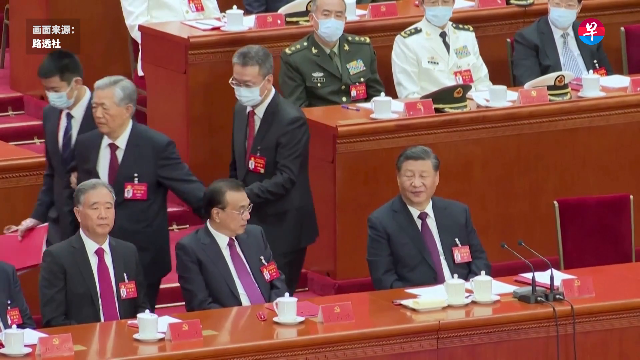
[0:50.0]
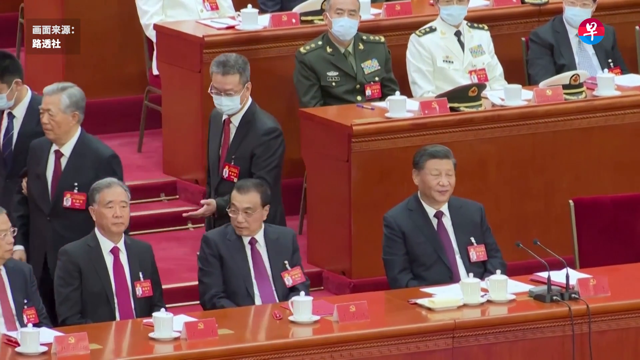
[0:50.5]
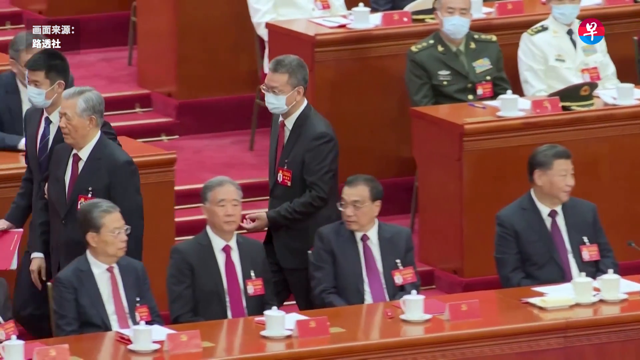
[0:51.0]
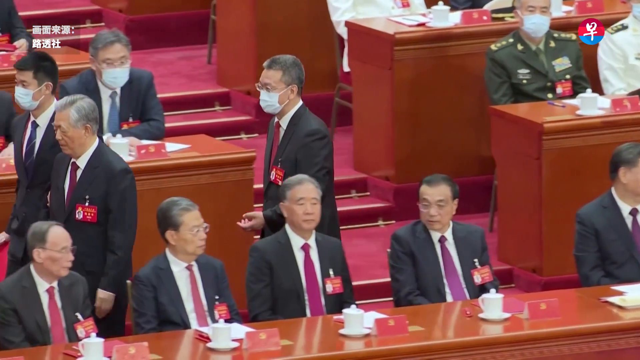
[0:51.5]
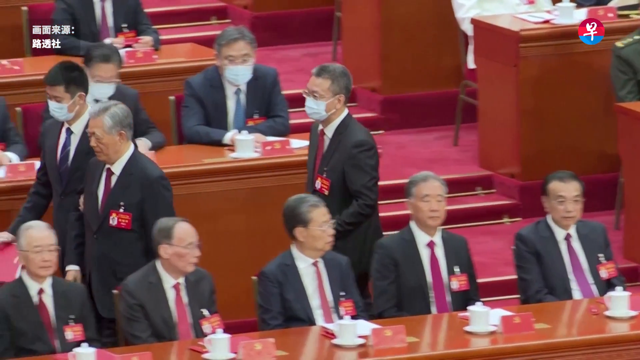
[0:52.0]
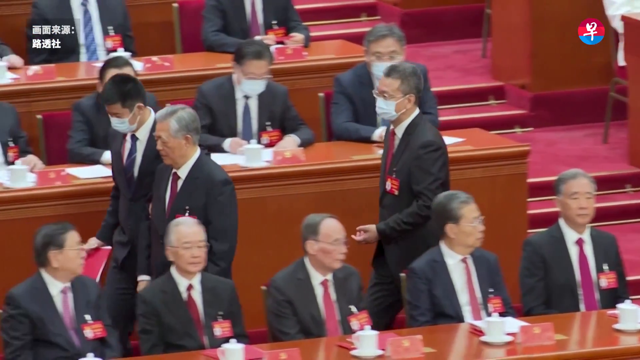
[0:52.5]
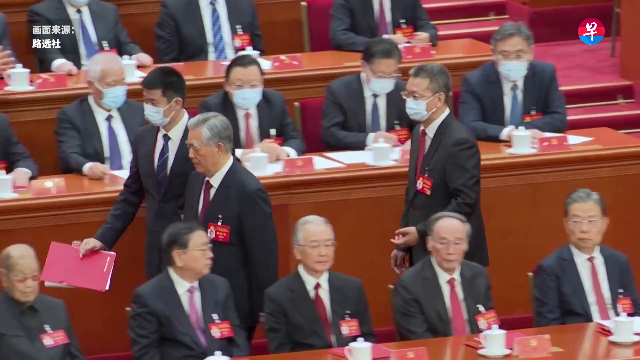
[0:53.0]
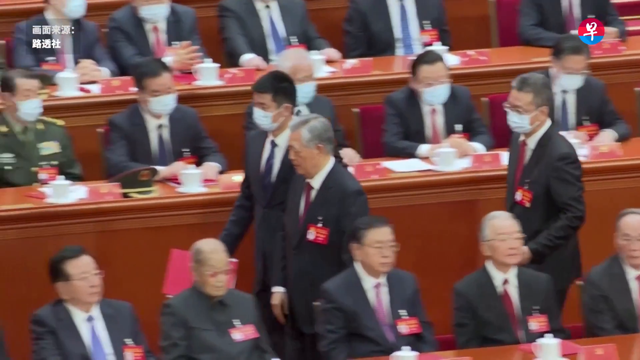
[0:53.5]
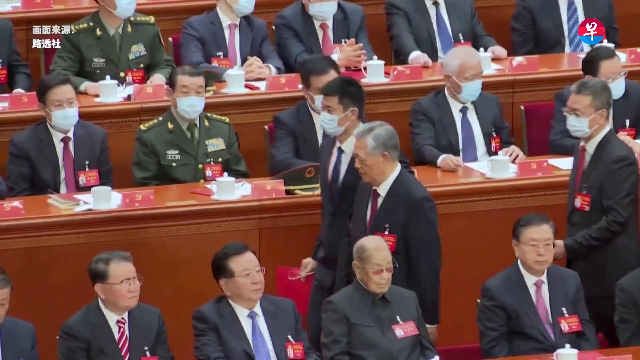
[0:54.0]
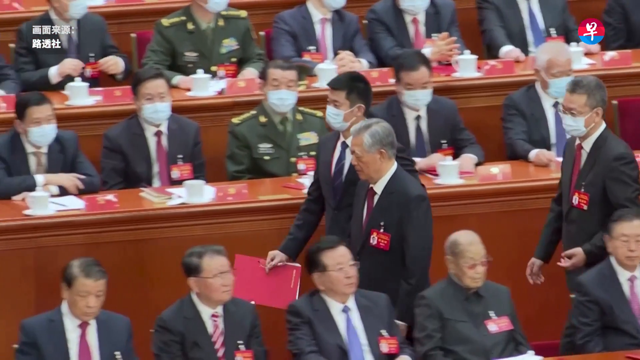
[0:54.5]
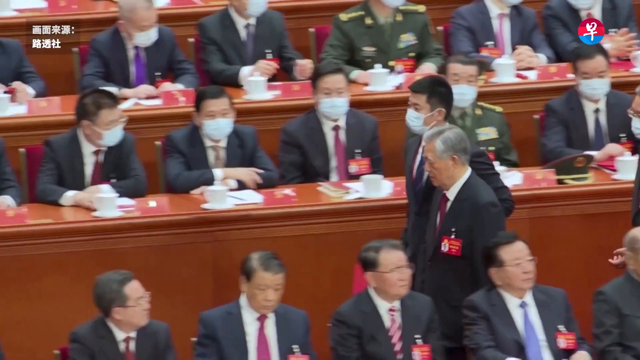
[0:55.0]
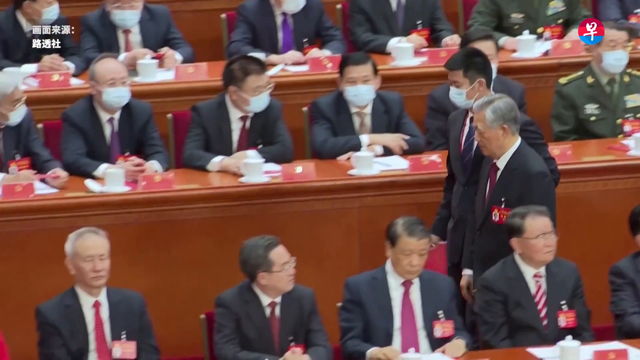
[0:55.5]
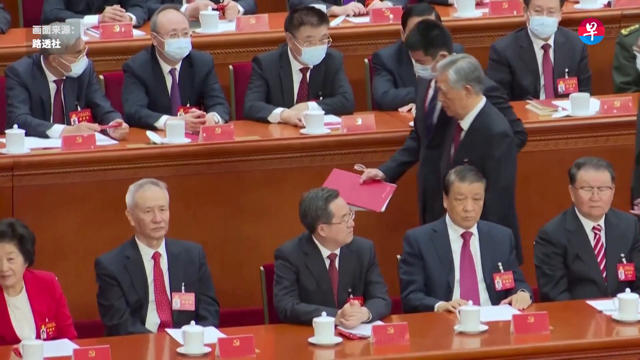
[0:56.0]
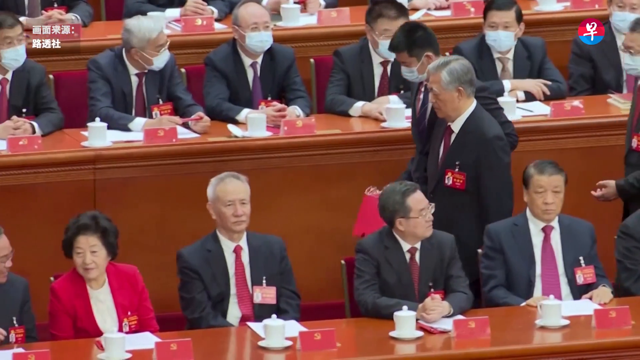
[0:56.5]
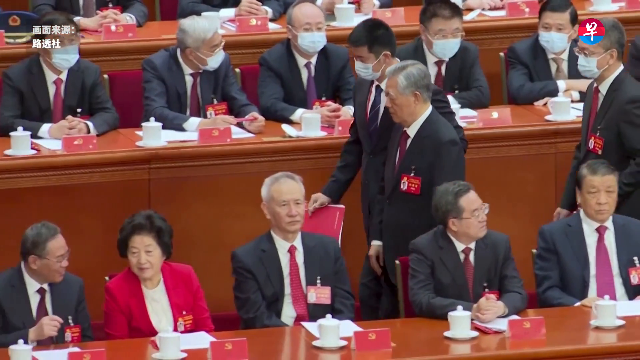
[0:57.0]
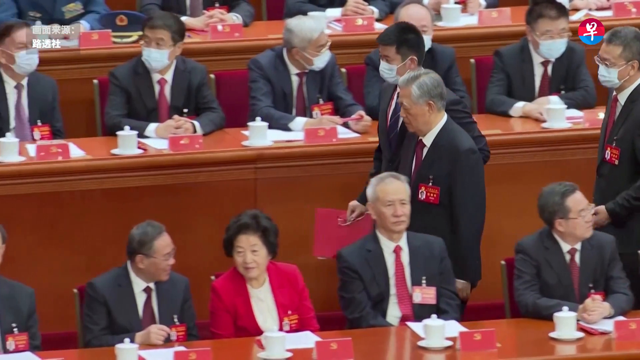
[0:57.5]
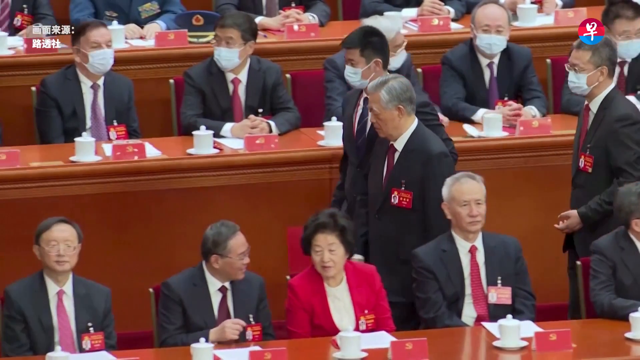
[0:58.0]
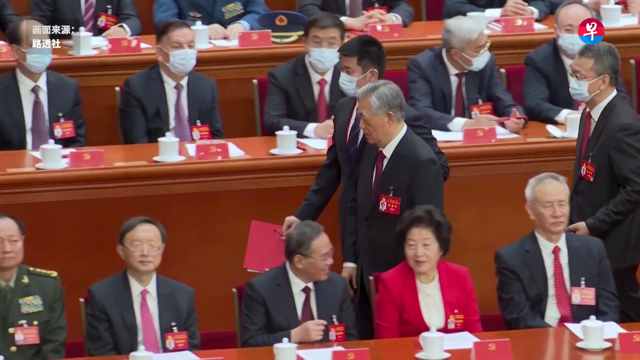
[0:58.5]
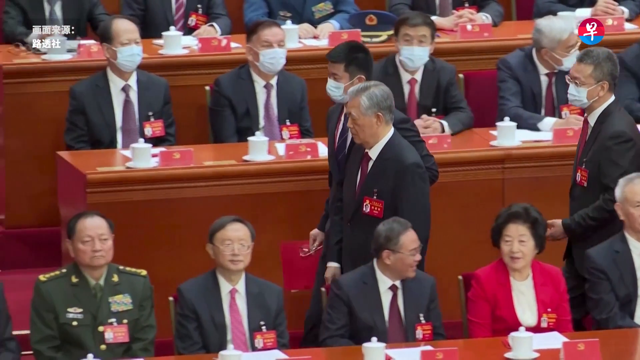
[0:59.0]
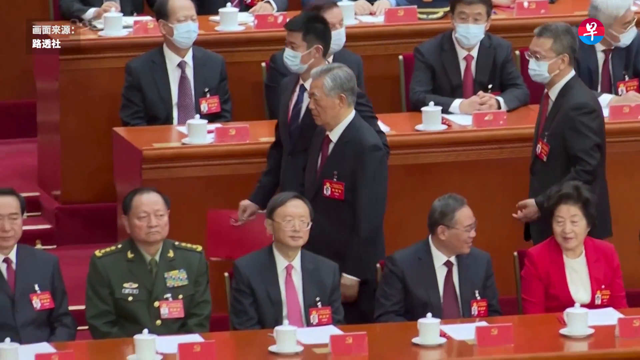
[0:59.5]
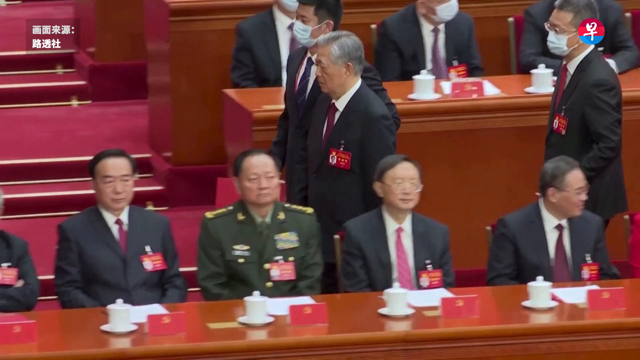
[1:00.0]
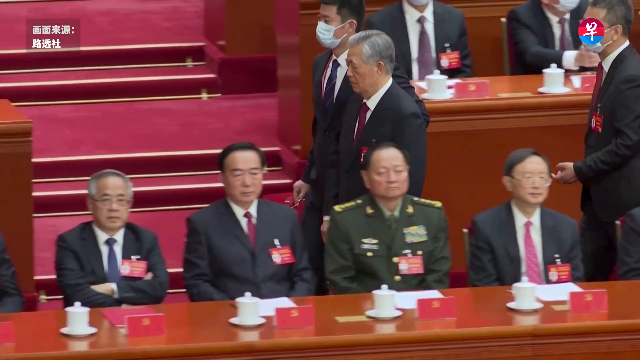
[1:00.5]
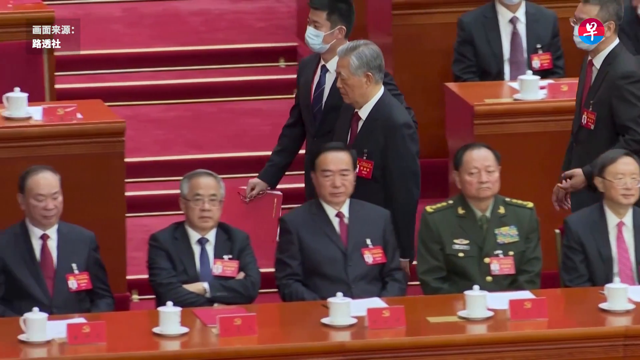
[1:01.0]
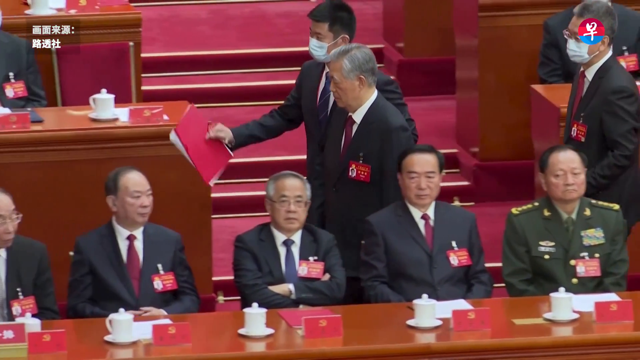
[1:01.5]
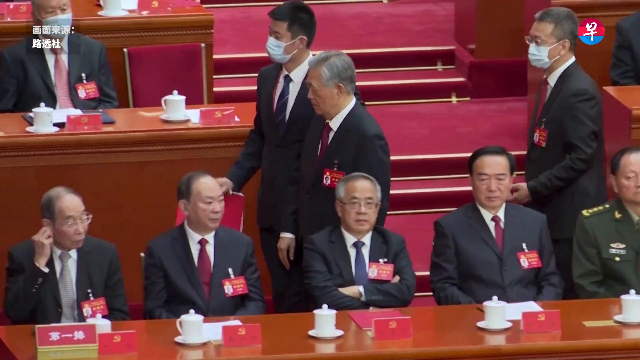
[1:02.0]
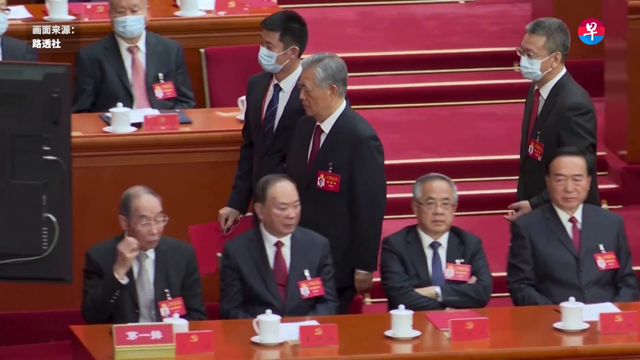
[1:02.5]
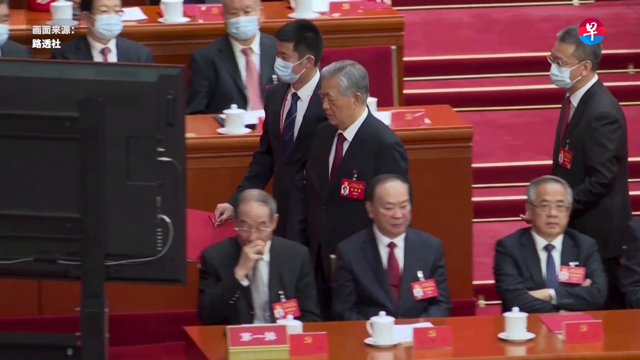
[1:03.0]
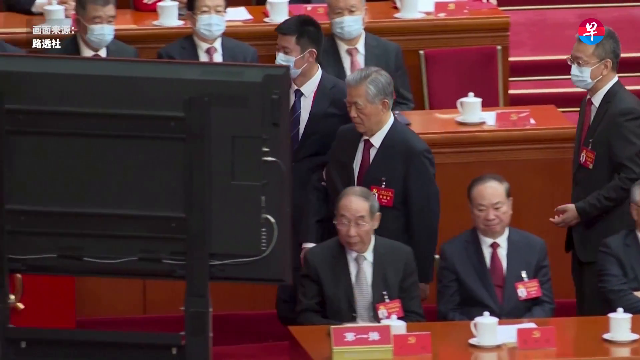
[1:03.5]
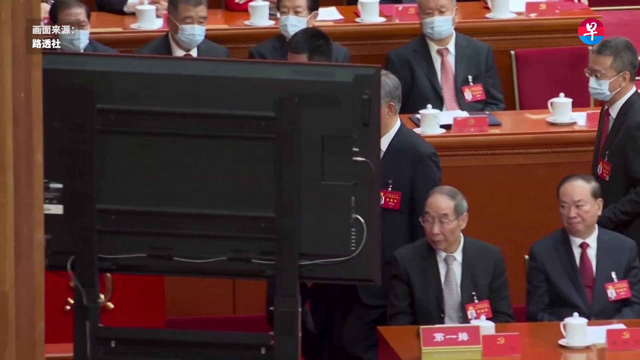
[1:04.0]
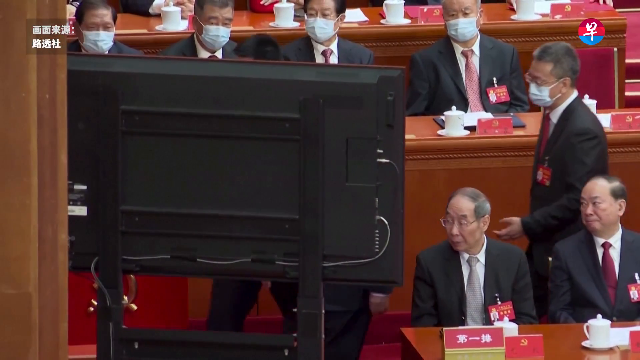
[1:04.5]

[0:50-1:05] An older gentleman with white and greyish hair, in a grey suit, is surrounded by other men in grey suits, white collared shirts and burgundy ties. He is escorted by a younger gentleman with short black hair and another gentleman behind him, both wearing masks. The gentlemen at the front are unmasked, while the gentlemen in the back two rows of long brown tables, sitting on red chairs, all wear white masks. They all have white cups with lids, a red square in front of each of them, and red identification tags on their jackets. A light greyish box at the top left has white lettering in another language, and there is a circle to the right, reddish on the top half and blue on the bottom half, with a white insignia in the centre. The older gentleman is escorted away as they walk past the rows of men, among them one woman in a pinkish red jacket. The flooring is pinkish red, with a stairwell in the centre, and a black TV screen is just off to the left side.